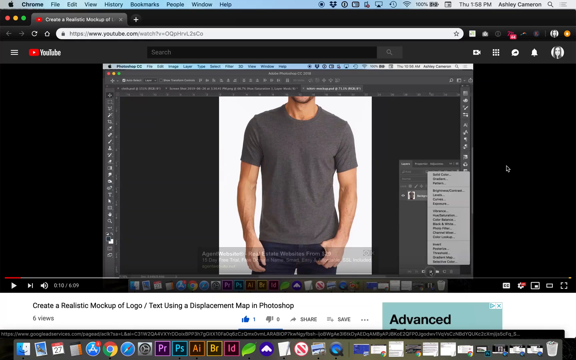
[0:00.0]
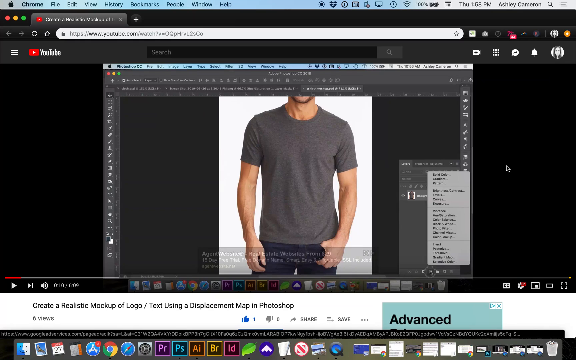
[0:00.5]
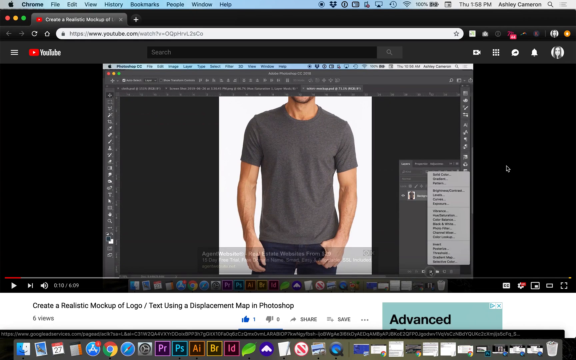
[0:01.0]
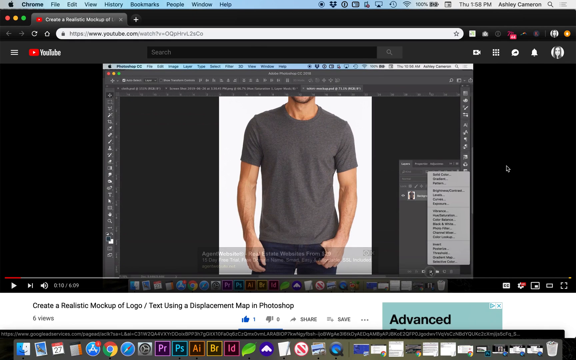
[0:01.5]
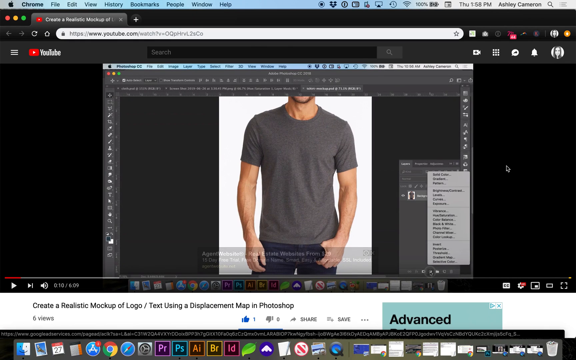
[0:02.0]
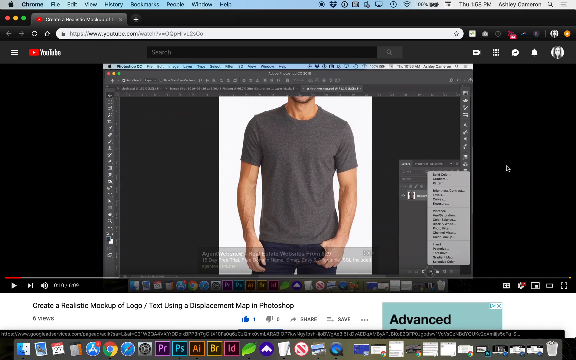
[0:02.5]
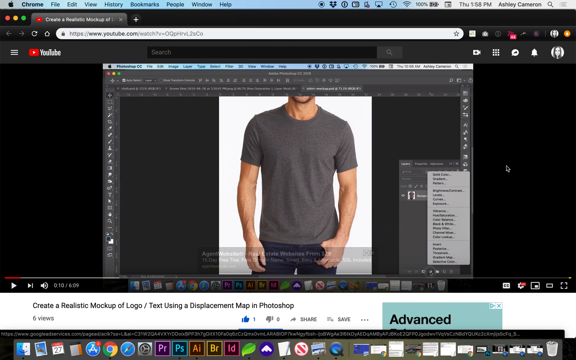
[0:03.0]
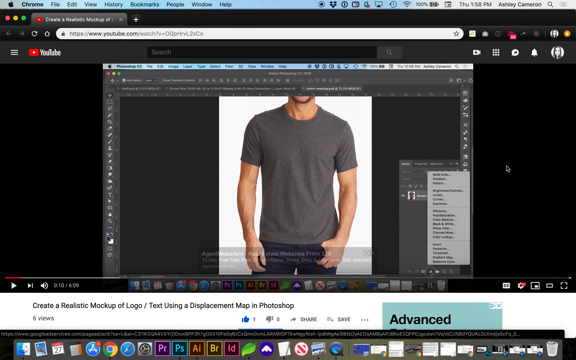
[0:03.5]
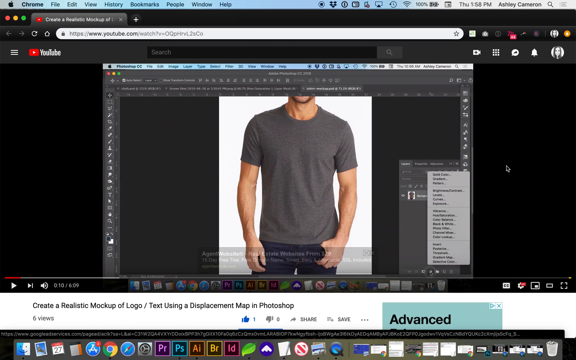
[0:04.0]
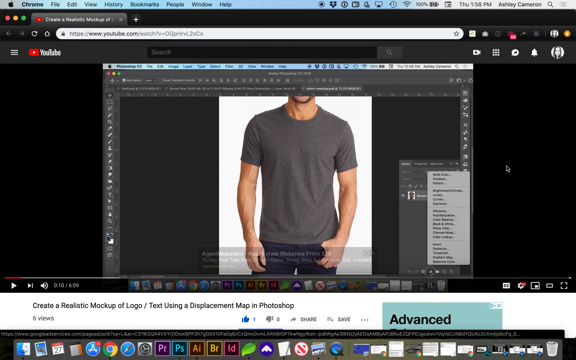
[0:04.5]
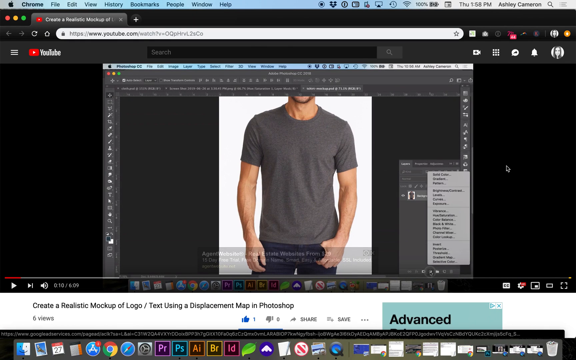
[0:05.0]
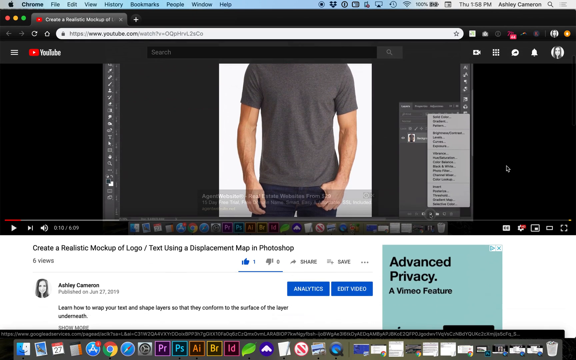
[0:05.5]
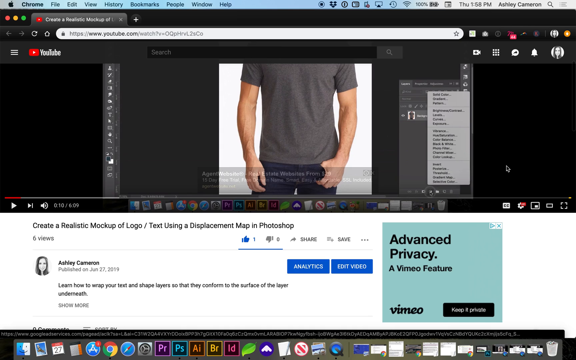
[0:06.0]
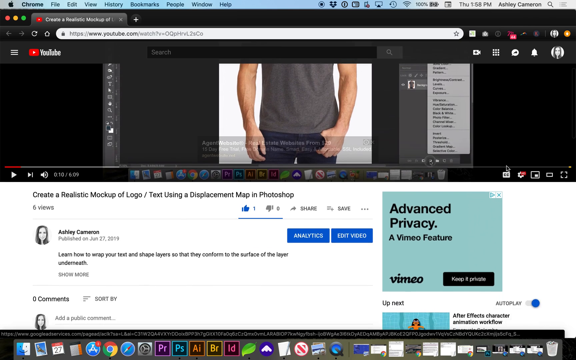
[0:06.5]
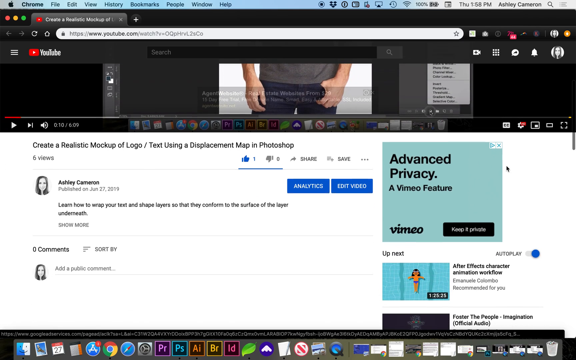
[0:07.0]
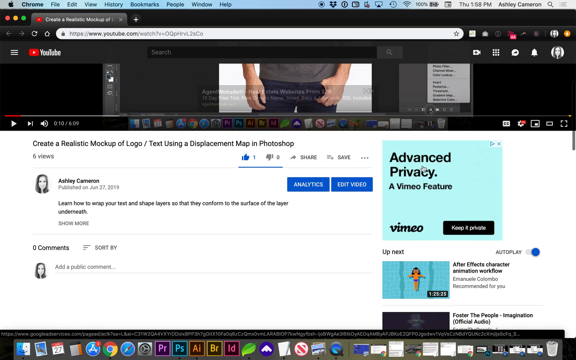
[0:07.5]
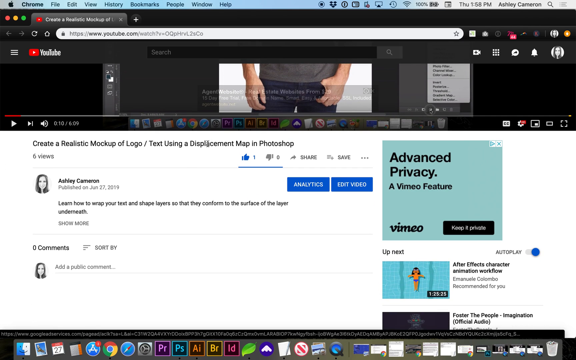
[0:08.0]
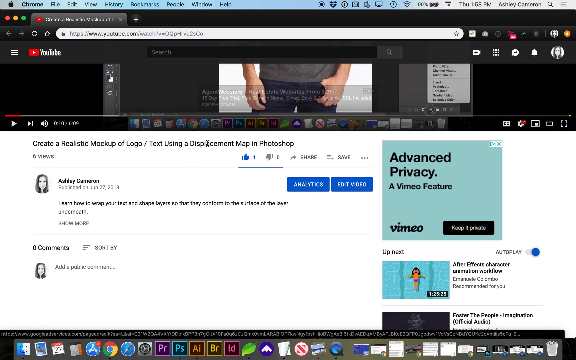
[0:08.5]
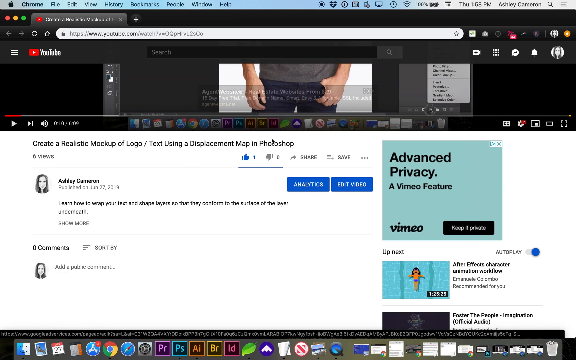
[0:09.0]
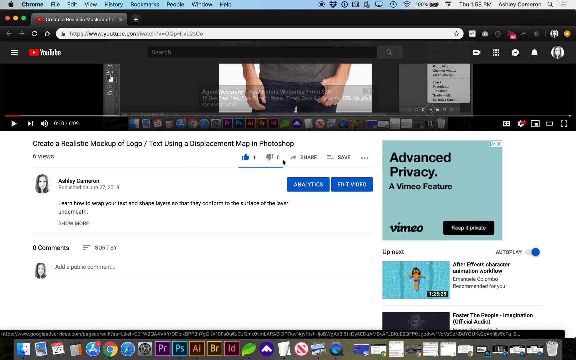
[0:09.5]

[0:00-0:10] A computer workspace shows Apple's Safari browser, with the Apple logo visible in the upper left corner. The YouTube page is open in the browser, and just below it is a screenshot of an image of a t-shirt that is kind of dark gray, black. The screen zooms in and out a bit, revealing the descriptions of an announcement about how to create a realistic mockup of a logo text using a displacement map in Photoshop.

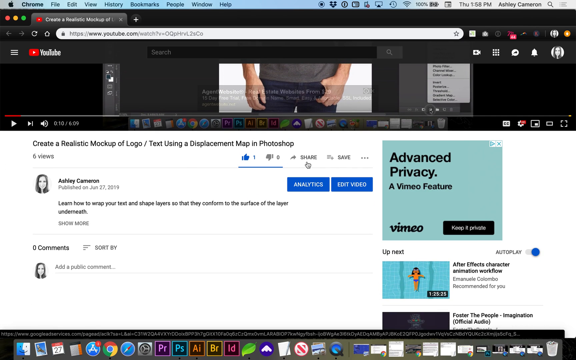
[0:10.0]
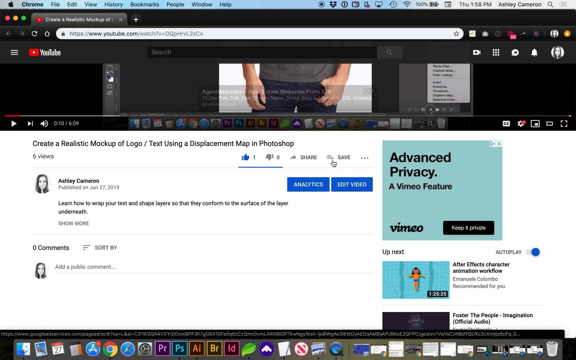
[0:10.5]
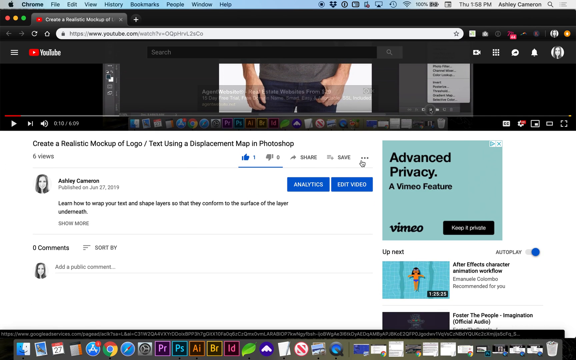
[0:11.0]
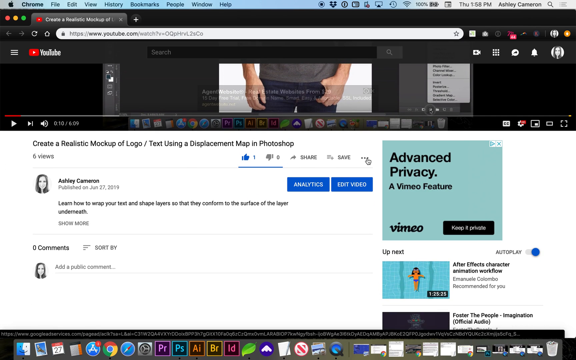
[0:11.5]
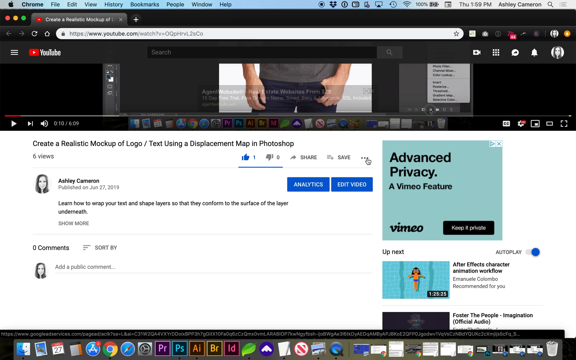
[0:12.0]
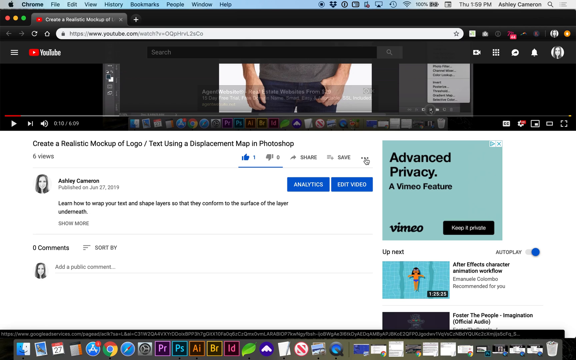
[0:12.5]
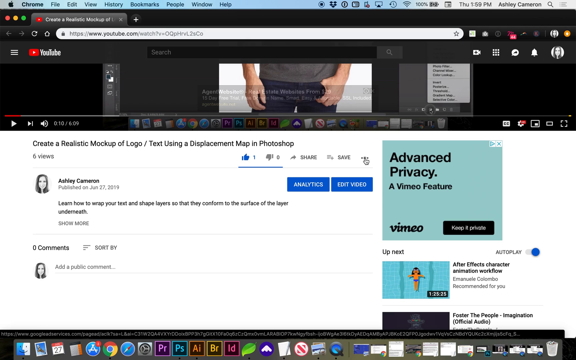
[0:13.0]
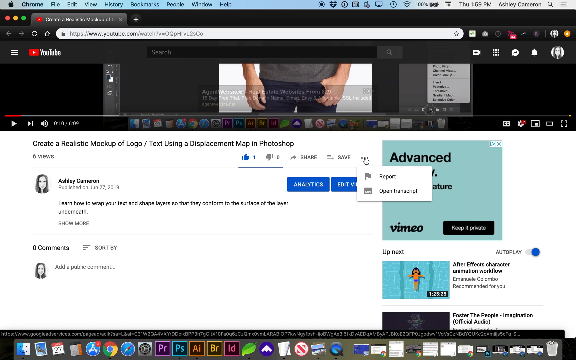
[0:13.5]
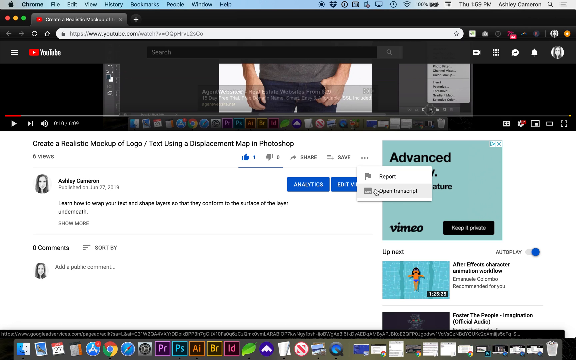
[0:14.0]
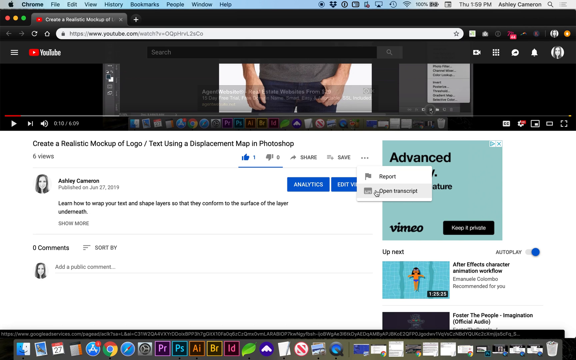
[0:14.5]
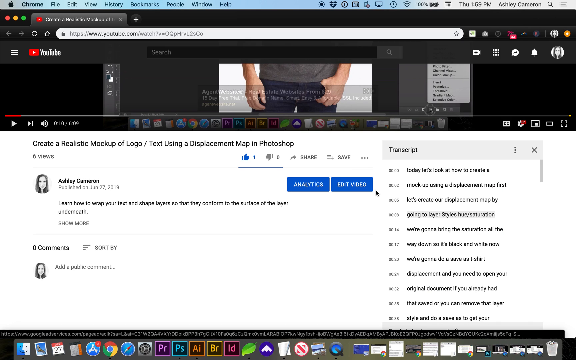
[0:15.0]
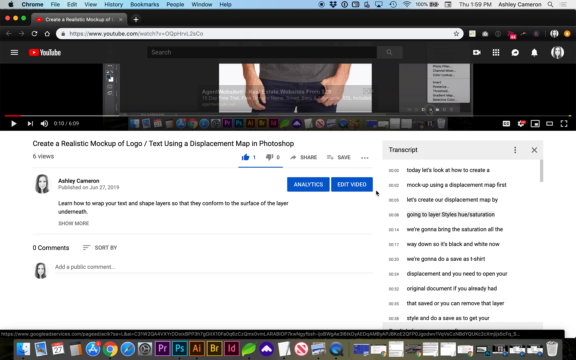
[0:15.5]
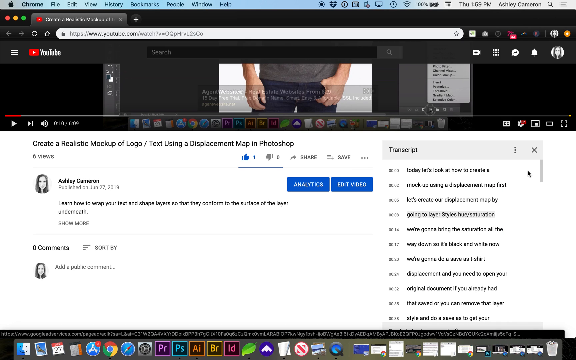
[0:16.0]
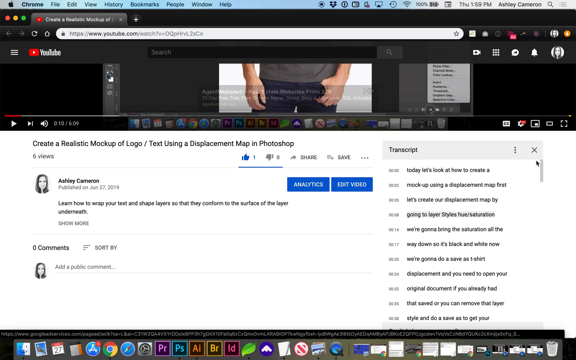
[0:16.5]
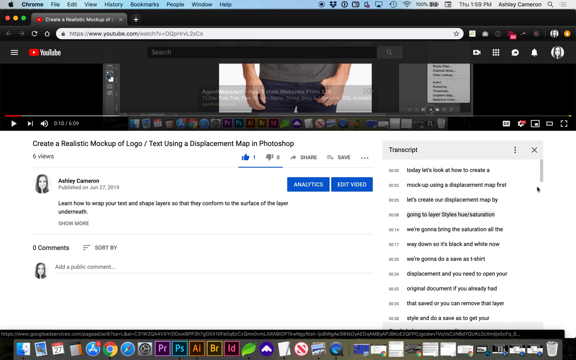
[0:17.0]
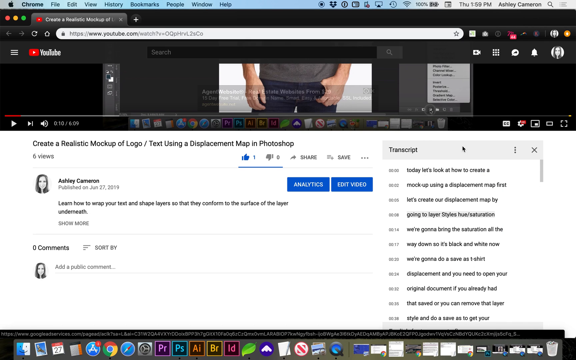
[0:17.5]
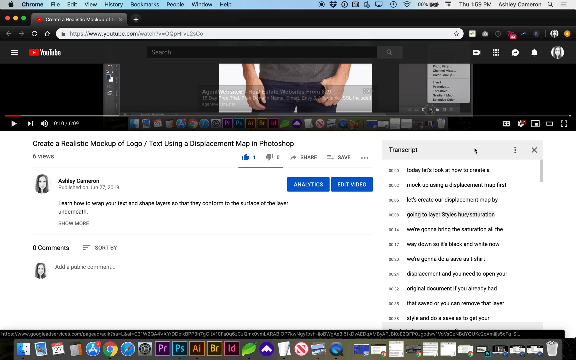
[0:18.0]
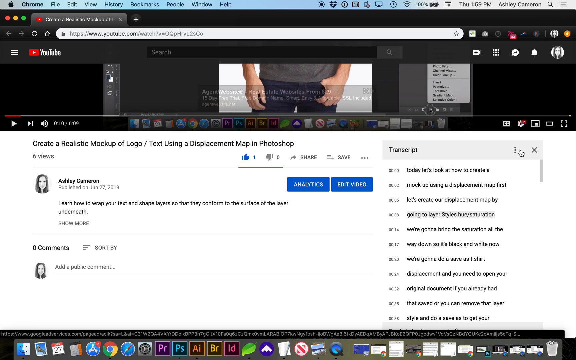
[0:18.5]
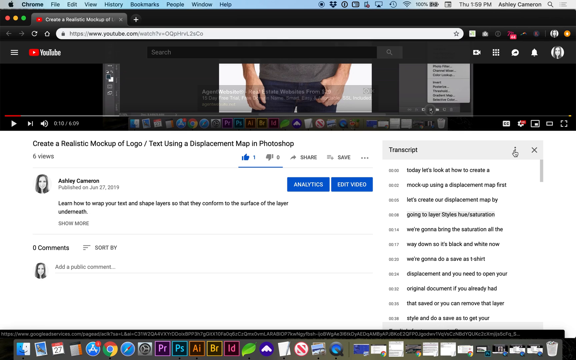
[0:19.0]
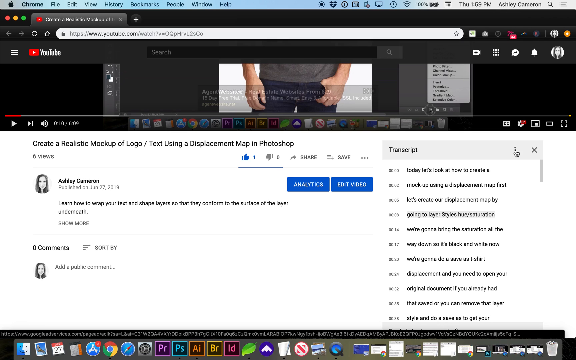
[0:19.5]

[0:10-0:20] The three dots button, located right next to the save button, is clicked, and two options appear: "Report" and "Open Transcript." Clicking "Open Transcript" brings up a transcription on the right side of the screen, with lines of subtitles for everything said in the video. The three dots of the transcription are then clicked.